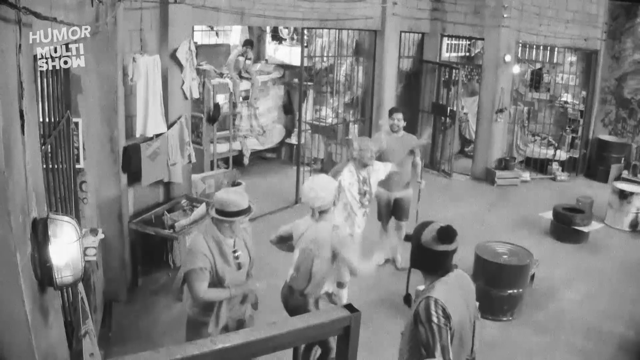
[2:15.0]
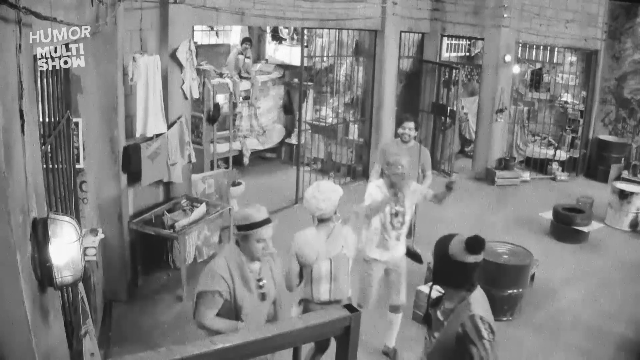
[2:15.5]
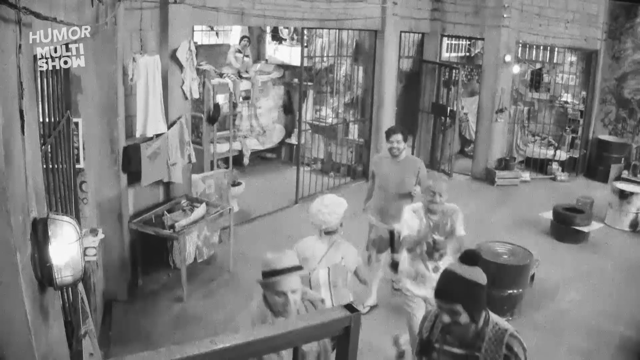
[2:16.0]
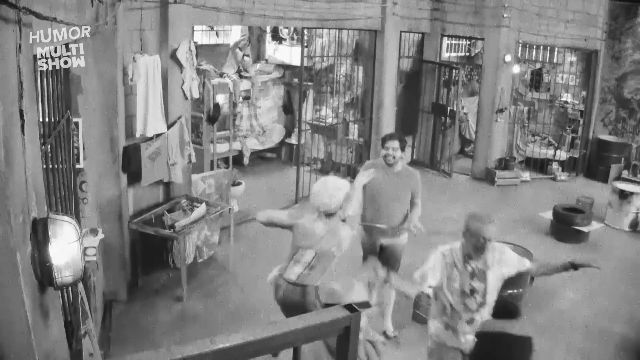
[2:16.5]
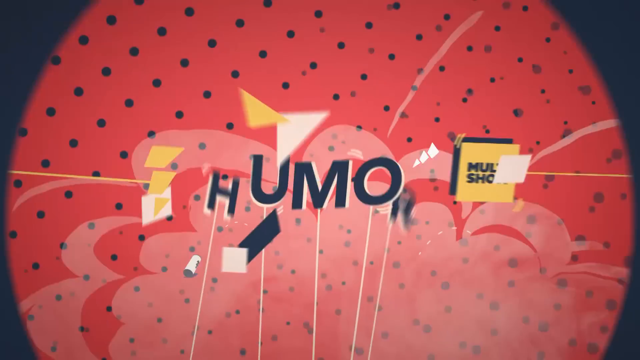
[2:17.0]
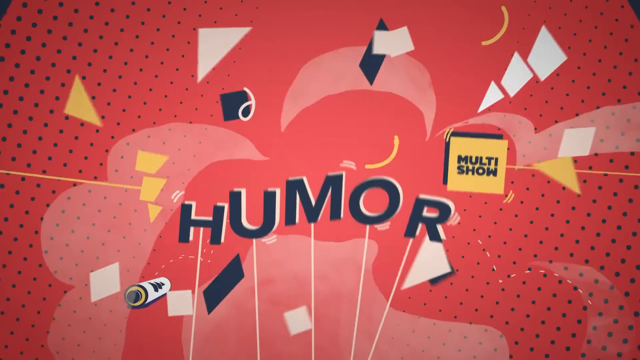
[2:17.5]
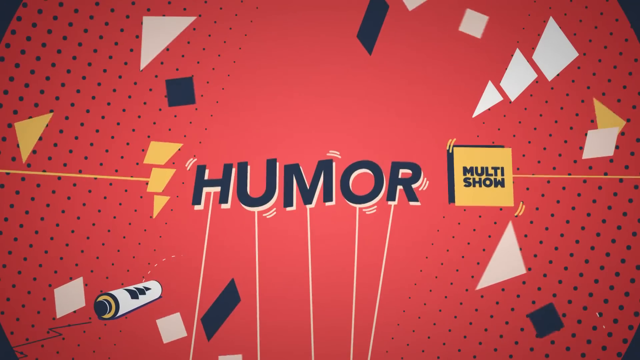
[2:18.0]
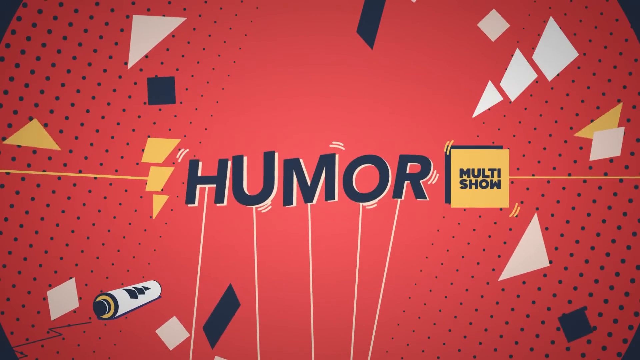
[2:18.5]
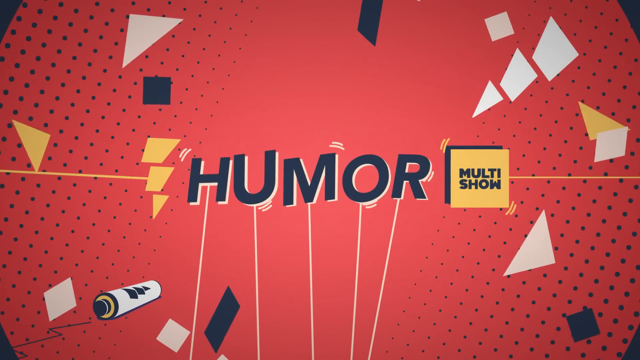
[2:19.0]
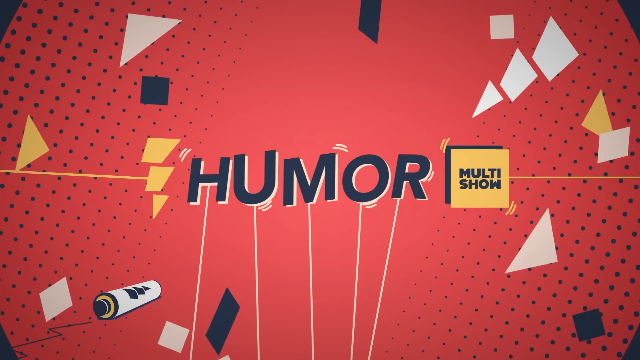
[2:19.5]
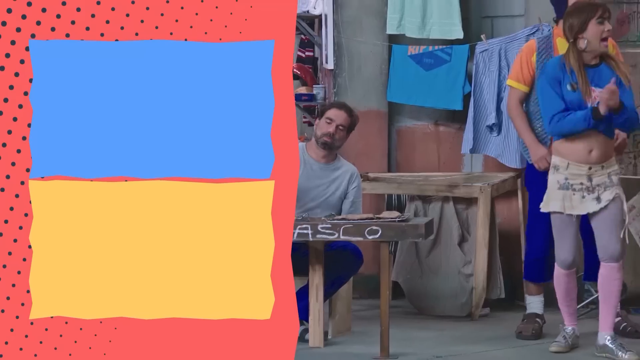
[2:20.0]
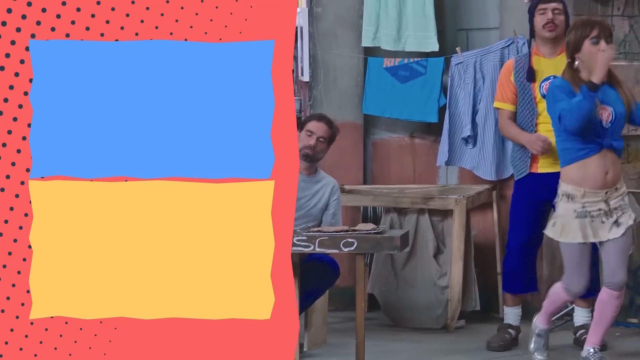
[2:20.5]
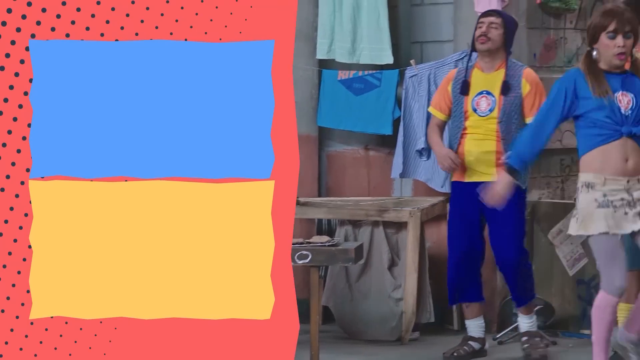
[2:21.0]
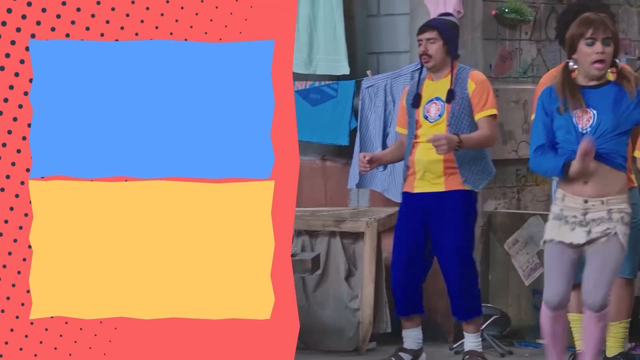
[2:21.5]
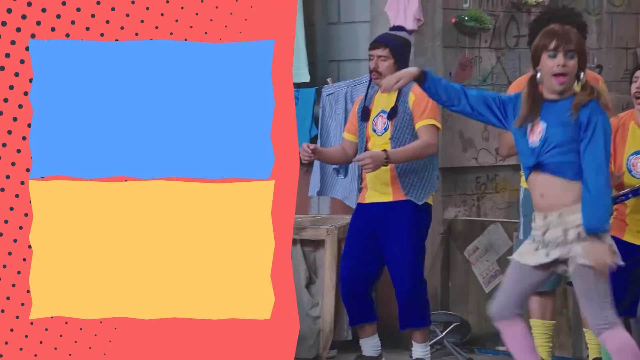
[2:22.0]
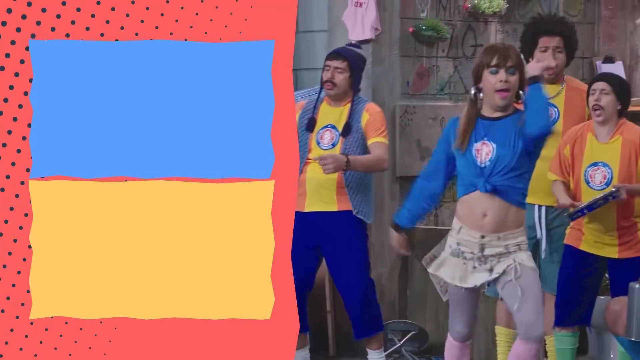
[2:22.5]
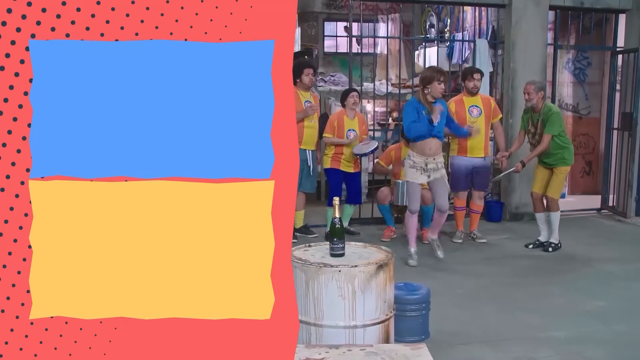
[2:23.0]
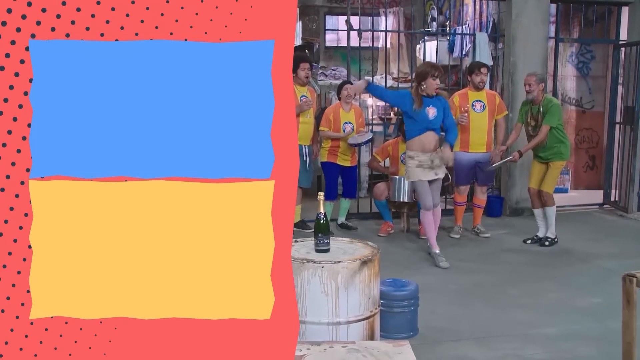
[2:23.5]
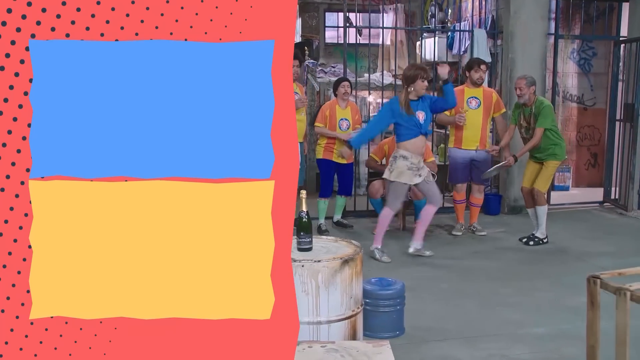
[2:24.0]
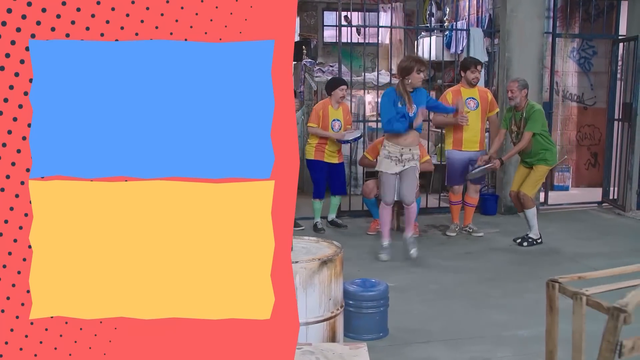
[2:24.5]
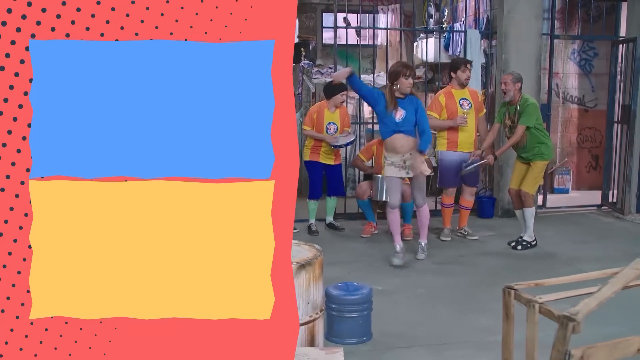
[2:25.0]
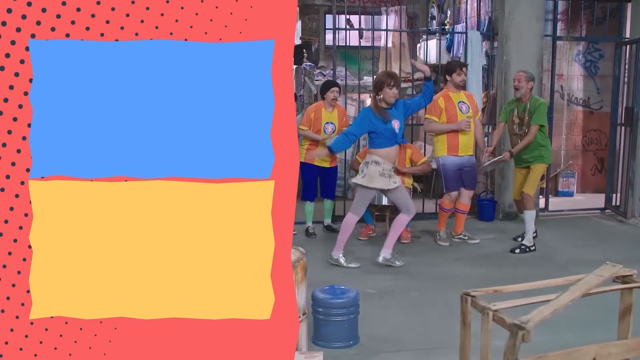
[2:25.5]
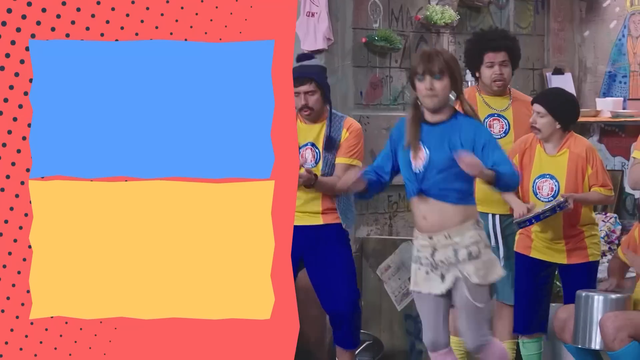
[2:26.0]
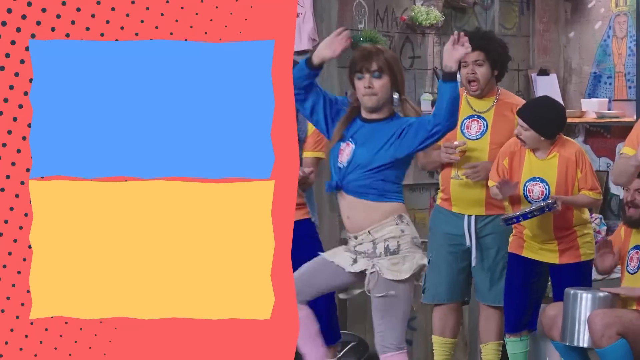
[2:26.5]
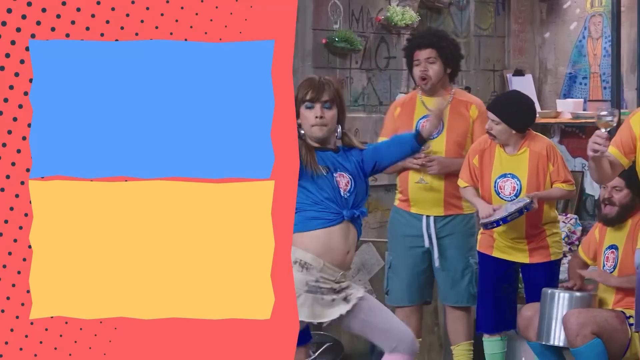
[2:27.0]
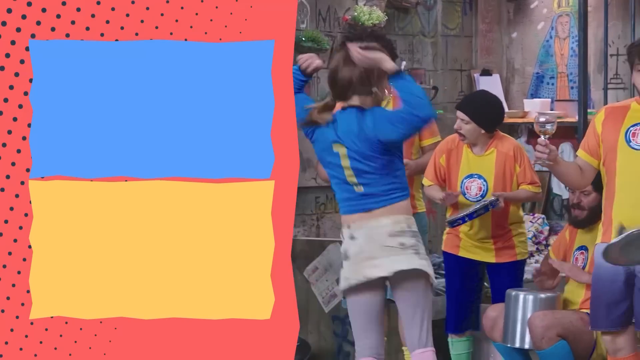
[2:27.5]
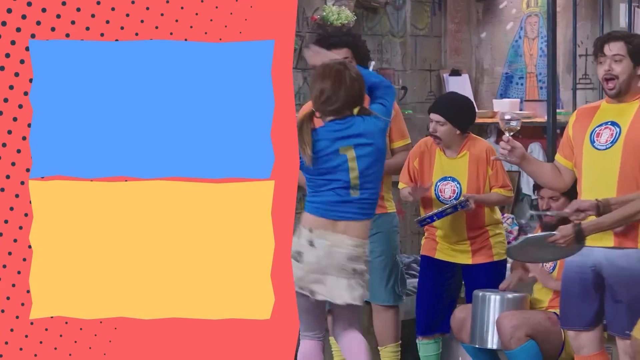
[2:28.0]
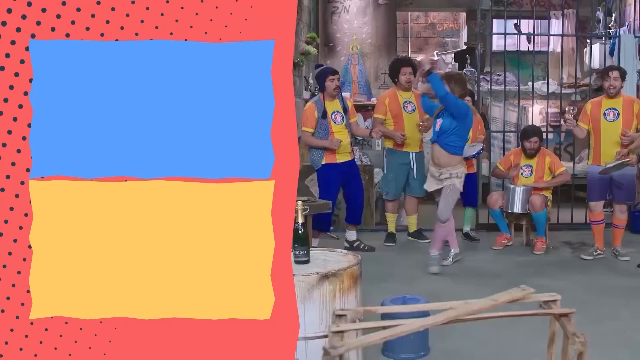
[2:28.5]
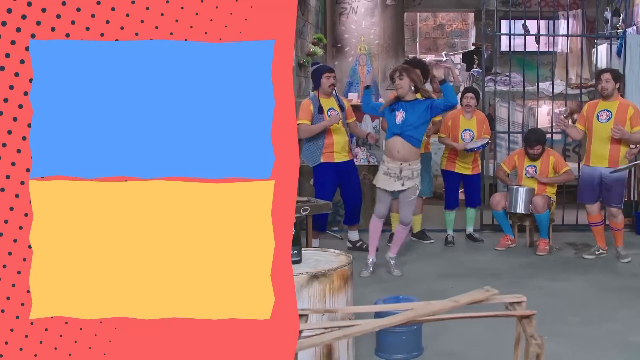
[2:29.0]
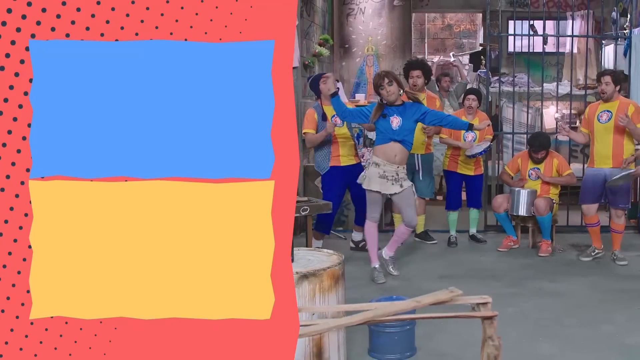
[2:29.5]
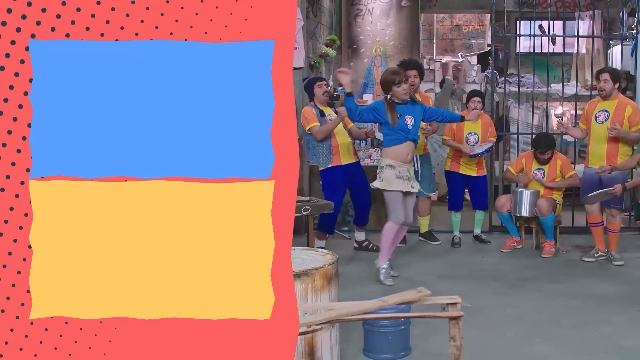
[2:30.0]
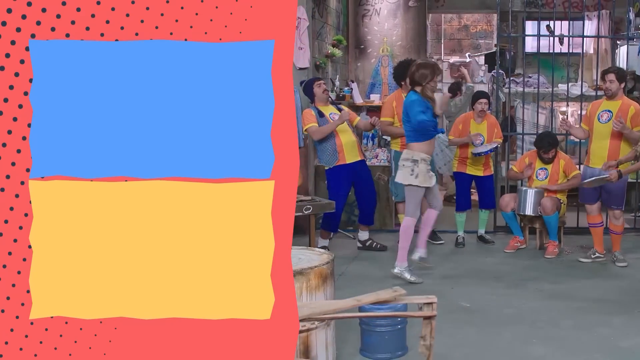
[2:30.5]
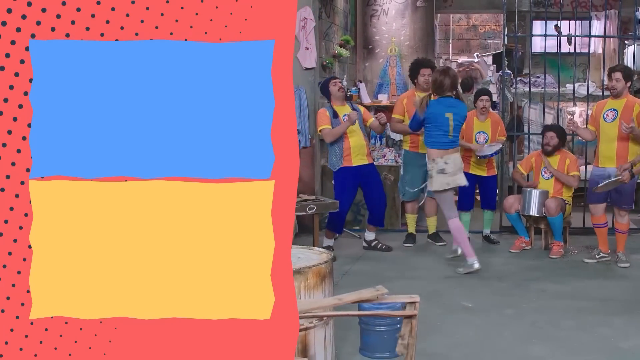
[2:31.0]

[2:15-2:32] A black and white commercial for something appears, then it bursts into another commercial advertising Multishow 100 and Humor Multishow. On the left are two episodes written in Spanish. On the right, a man dressed like a woman dances in a skirt, a cropped blue top, ponytails and gold shoes. Next to her, men in yellow and orange jerseys and blue shorts dance, gesture and beat on pots and pans while she dances. It is some kind of comedy skit set in a jail environment, with five men in the yellow and orange shirts and blue pants cheering the girl with the blue pants.